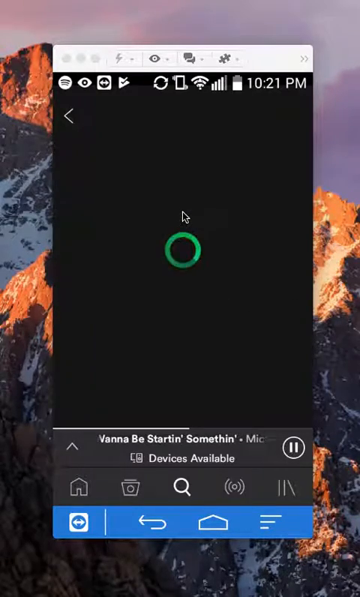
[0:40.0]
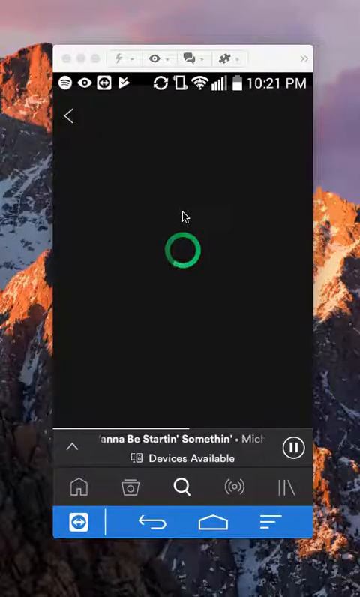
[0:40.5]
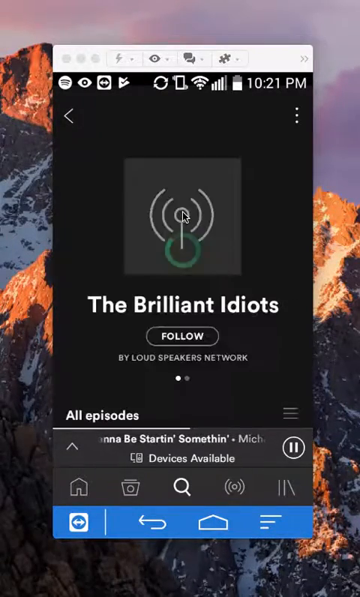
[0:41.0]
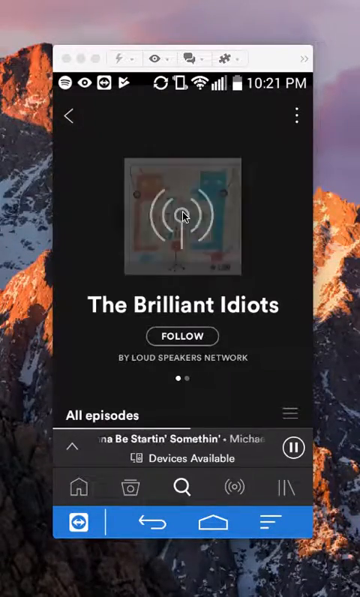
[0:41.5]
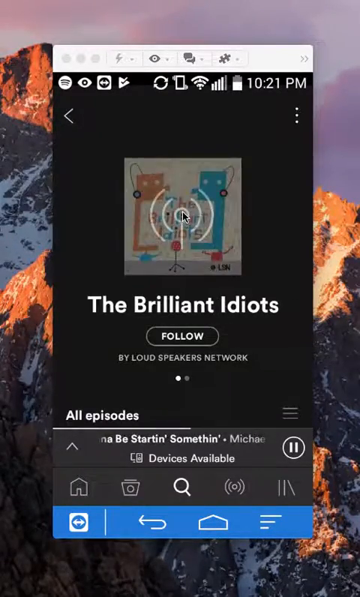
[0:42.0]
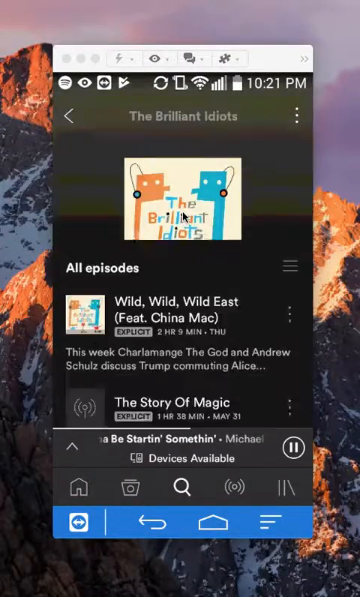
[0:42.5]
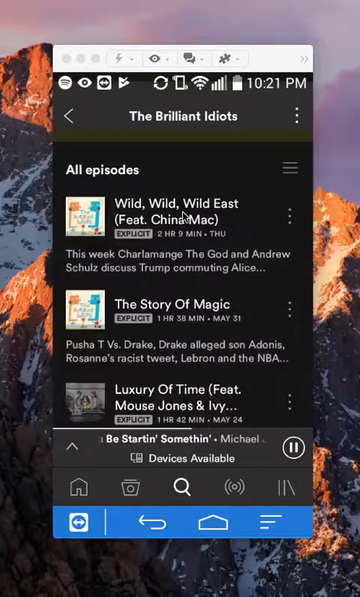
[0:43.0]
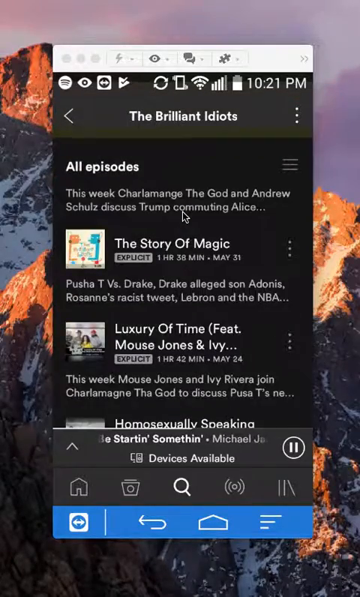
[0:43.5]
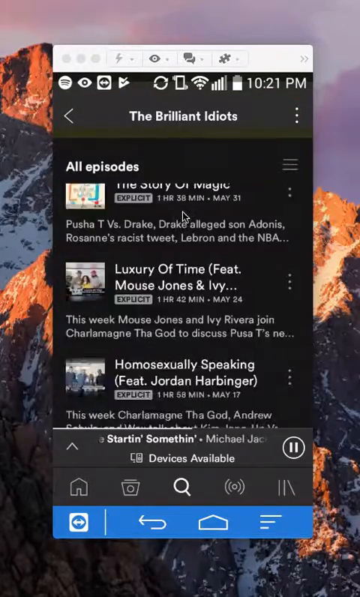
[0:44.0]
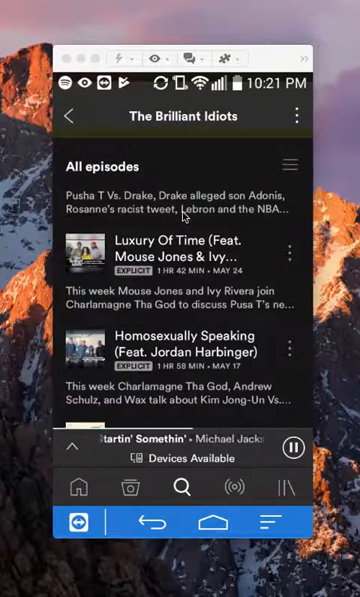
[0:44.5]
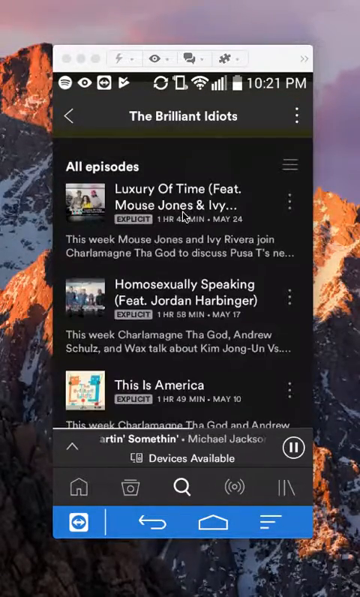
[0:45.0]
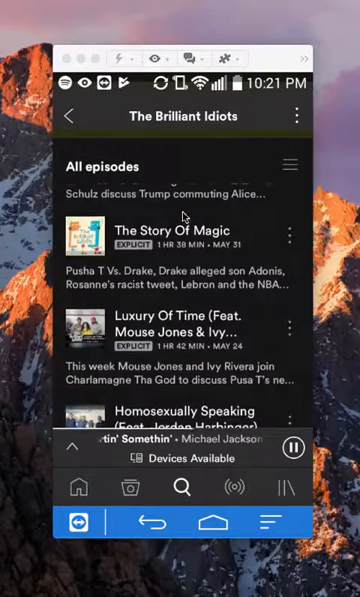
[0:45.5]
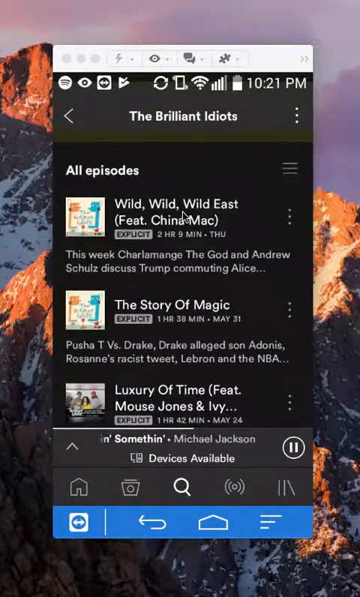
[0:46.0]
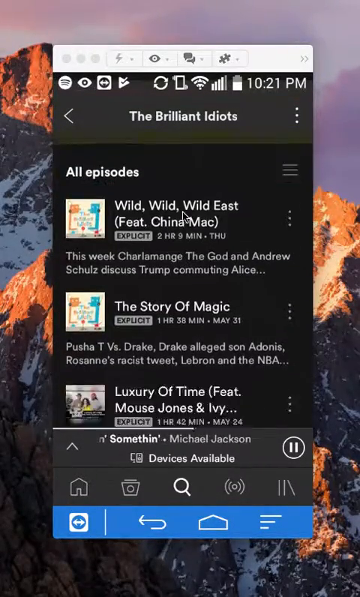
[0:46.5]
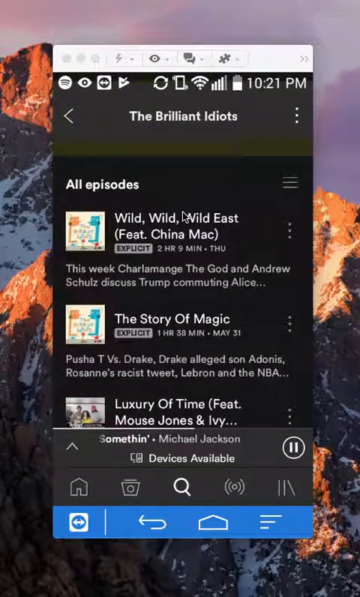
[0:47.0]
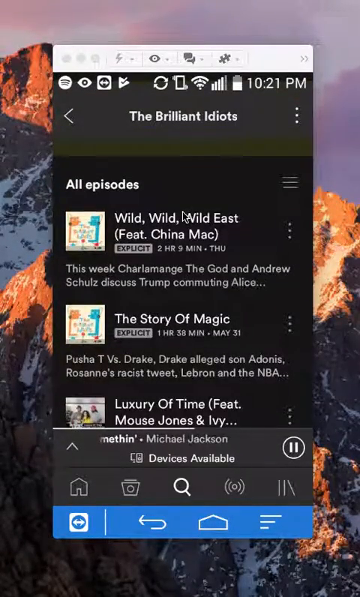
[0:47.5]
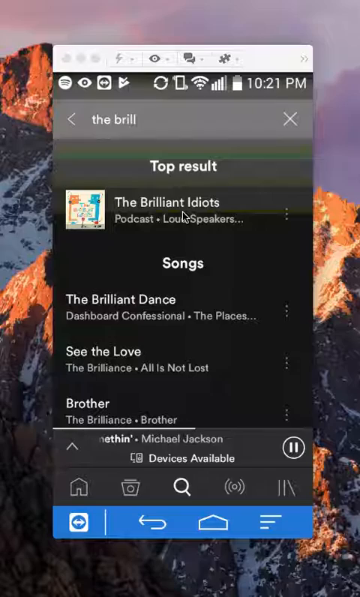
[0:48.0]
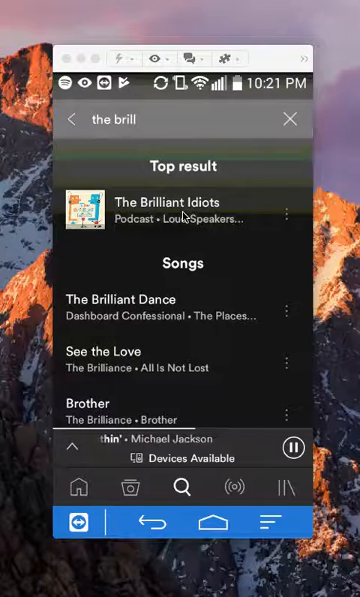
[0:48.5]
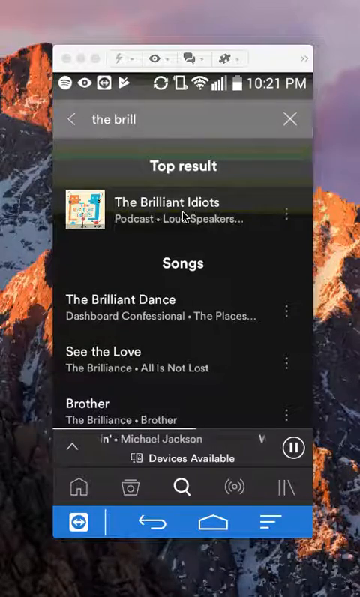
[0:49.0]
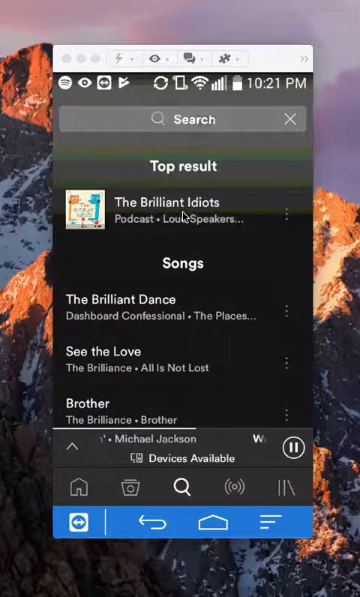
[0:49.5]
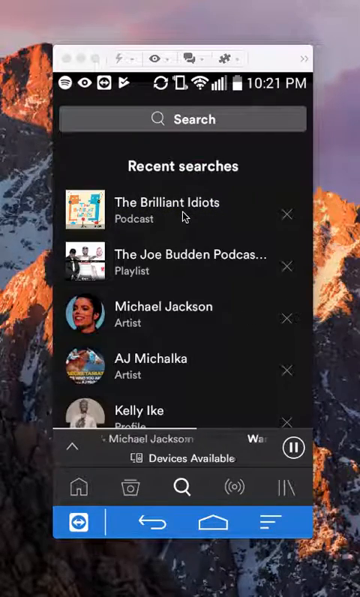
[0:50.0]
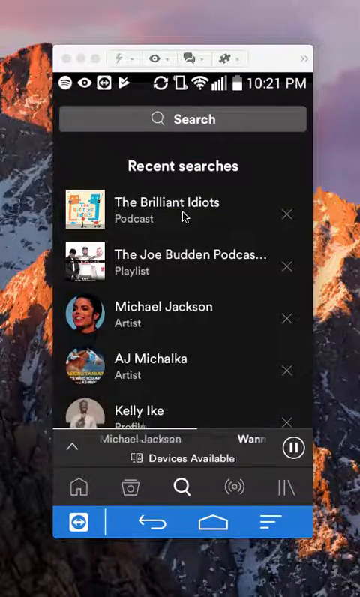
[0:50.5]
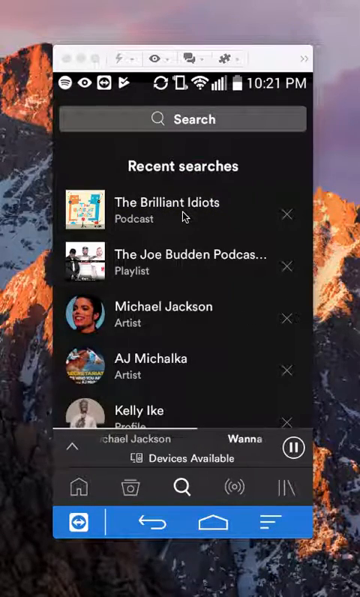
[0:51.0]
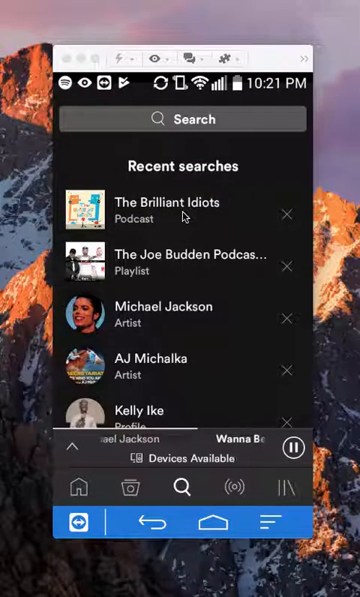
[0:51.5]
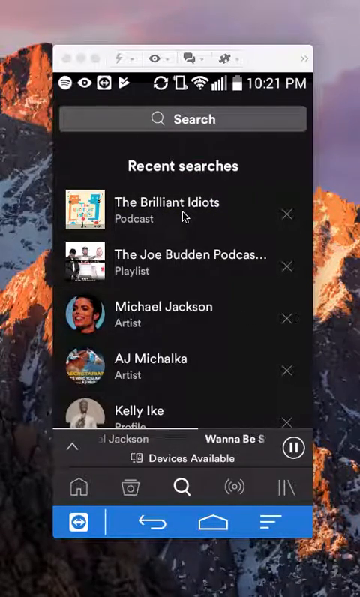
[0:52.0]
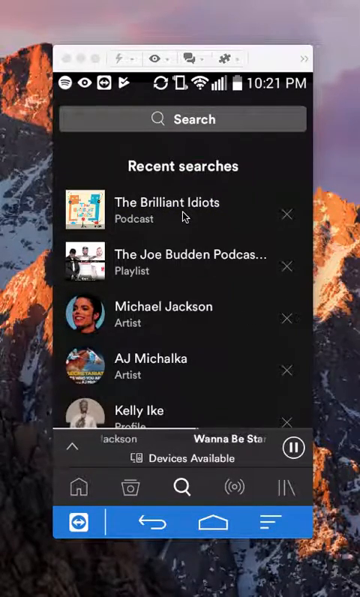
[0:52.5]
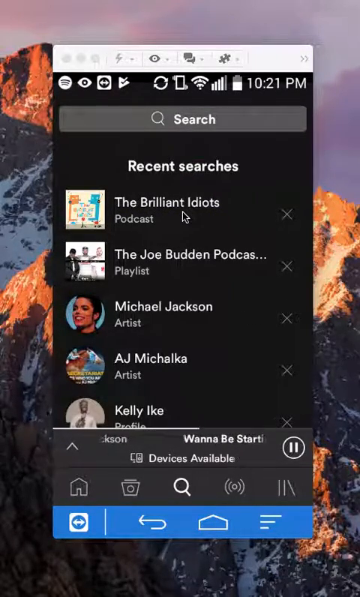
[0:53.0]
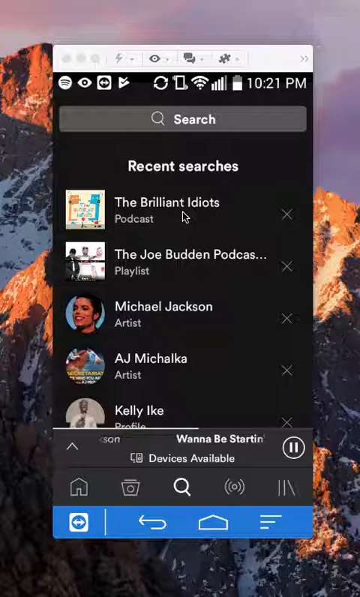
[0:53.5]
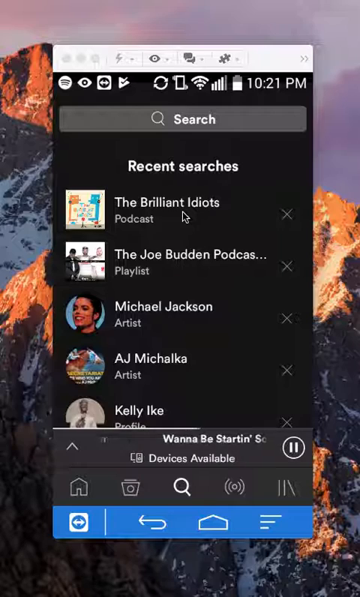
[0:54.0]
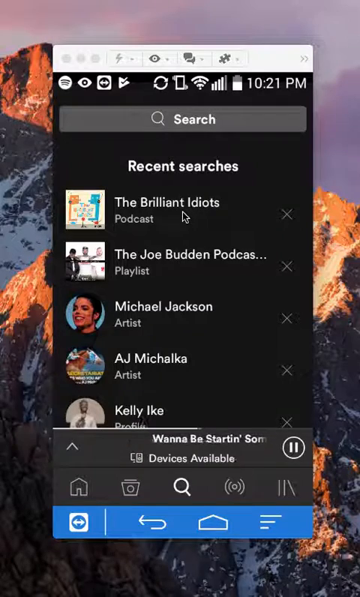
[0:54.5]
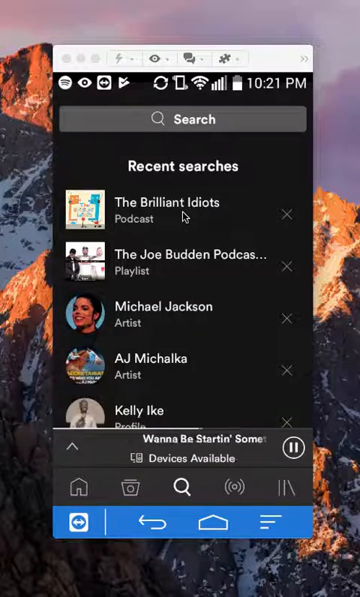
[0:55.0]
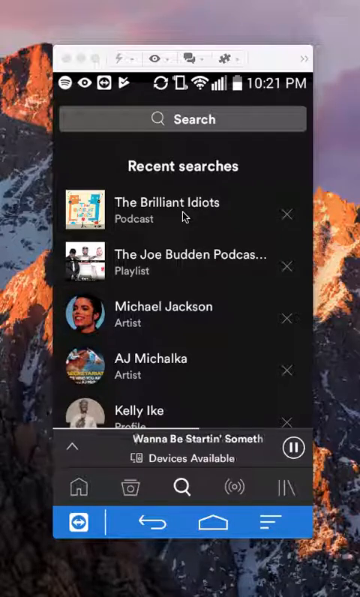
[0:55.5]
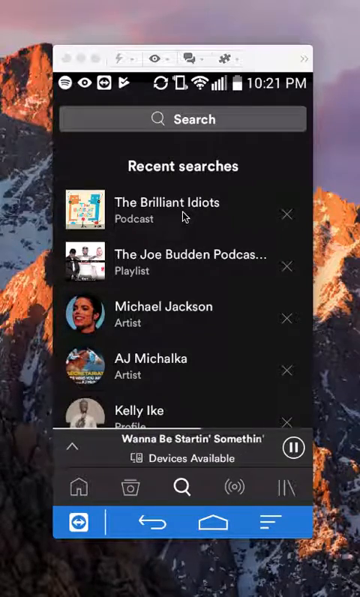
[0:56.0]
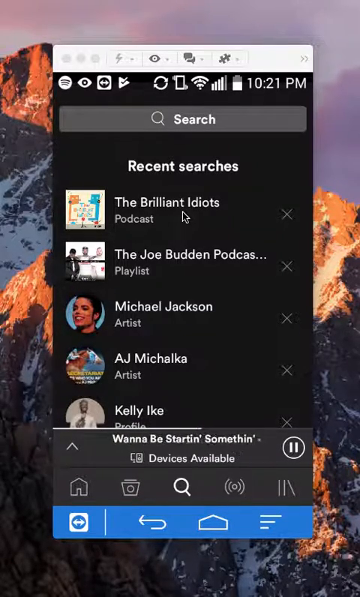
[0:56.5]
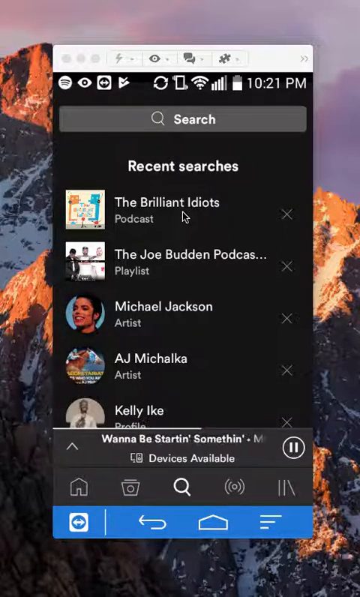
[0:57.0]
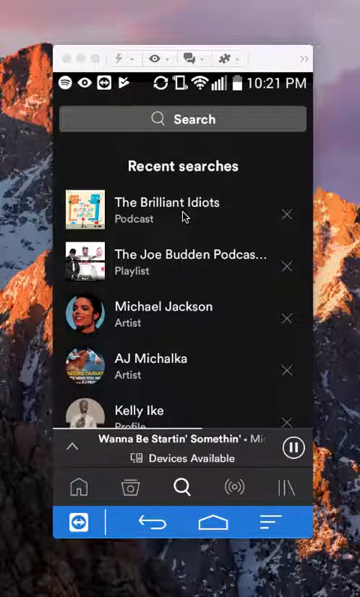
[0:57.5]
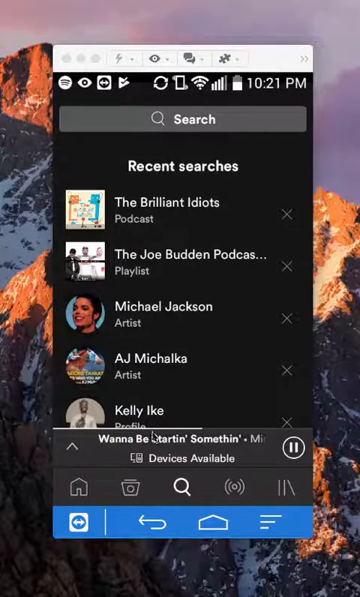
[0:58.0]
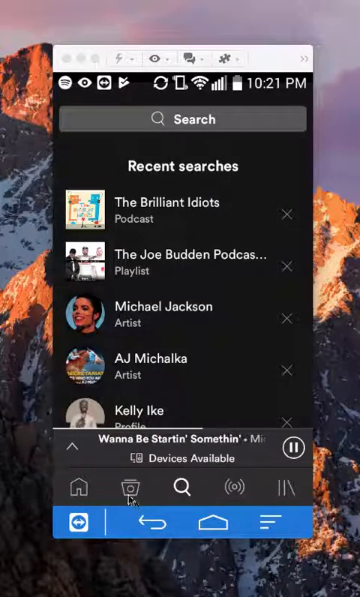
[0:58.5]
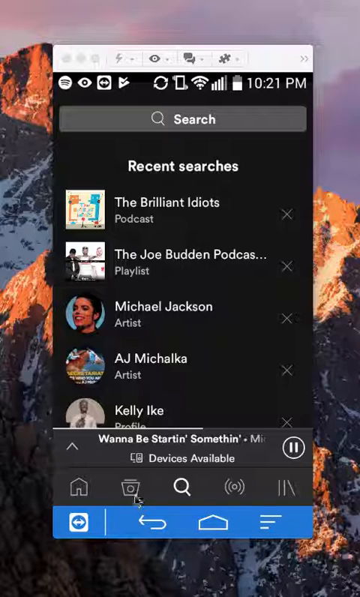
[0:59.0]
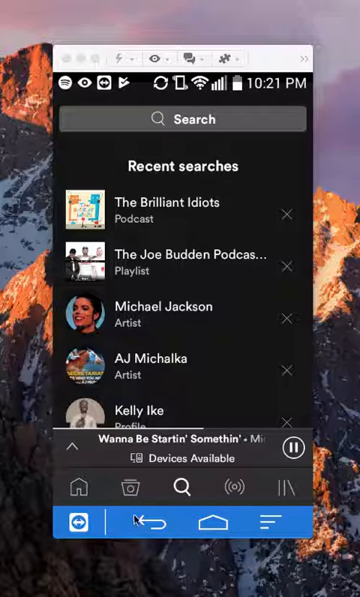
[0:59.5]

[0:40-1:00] A mobile application's interface is overlaid on a background image of a mountainside with snow on jagged rocks. In the middle of the interface, a circle shows a loading animation moving in a circular fashion. After a short loading period, a page loads with the title "The Brilliant Idiots". There is a large follow button underneath the name, and the page's avatar loads, showing an orange mouth next to a large blue mouth within an oversized head, with the name "The Brilliant Idiots" in blue and orange letters between the two mouths. The two large oversized mouths and heads are placed on top of a small stick figure body. The page is then scrolled down, and under an "All Episodes" heading the episode titles are listed from newest to oldest. After scrolling down the episode list, the user goes back to the recent searches page, which has an empty search bar at the top and the recently searched items listed from most recent to oldest, with Kelly Like shown at the bottom.